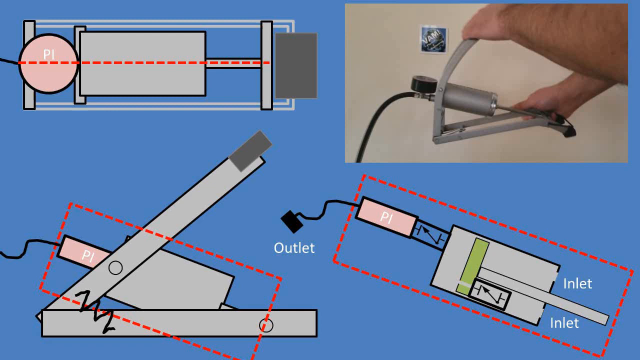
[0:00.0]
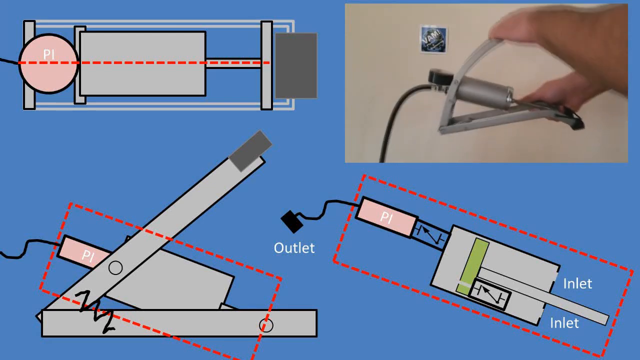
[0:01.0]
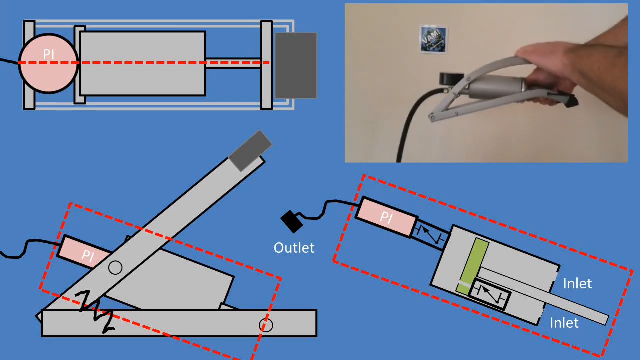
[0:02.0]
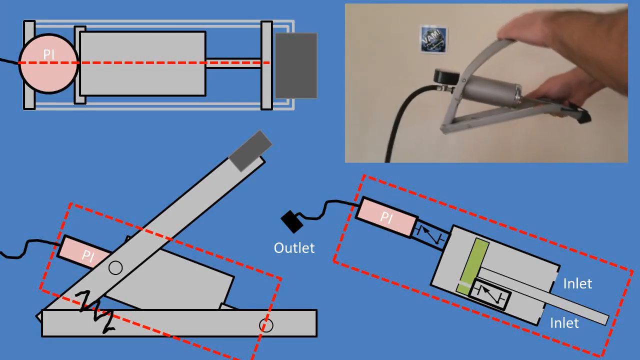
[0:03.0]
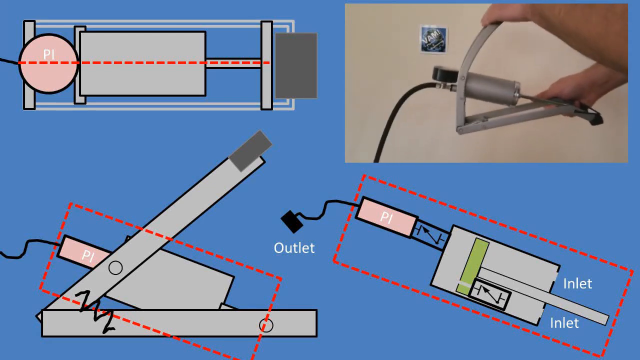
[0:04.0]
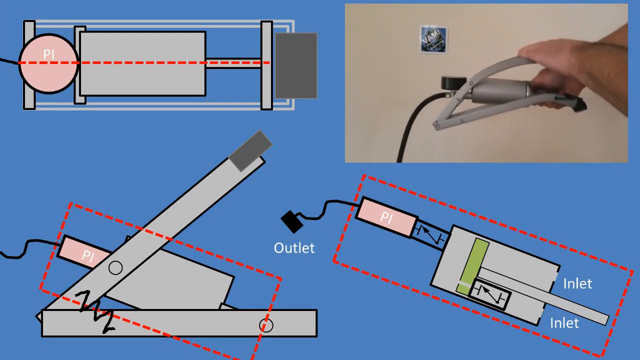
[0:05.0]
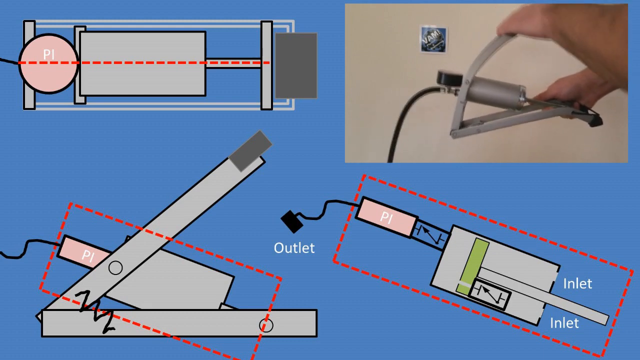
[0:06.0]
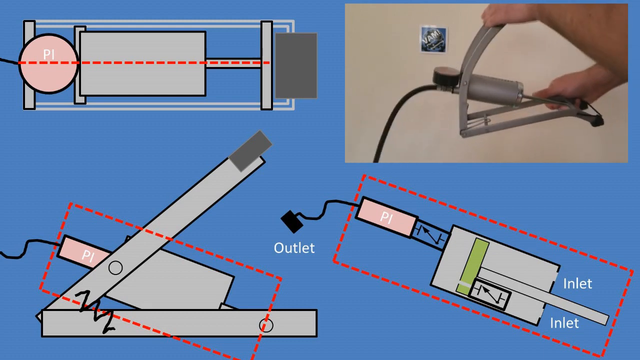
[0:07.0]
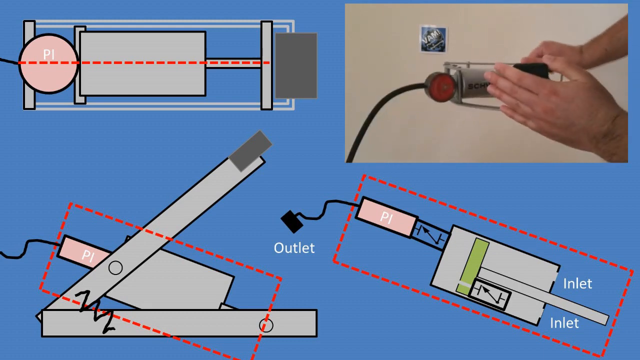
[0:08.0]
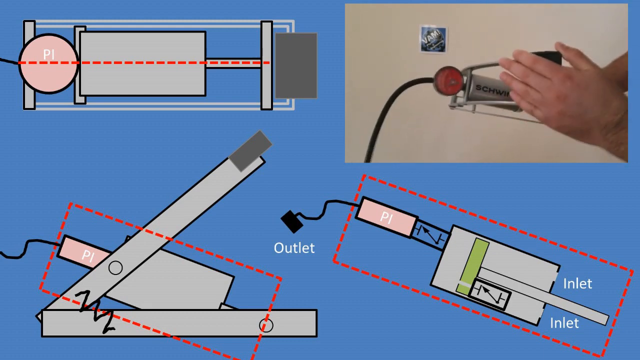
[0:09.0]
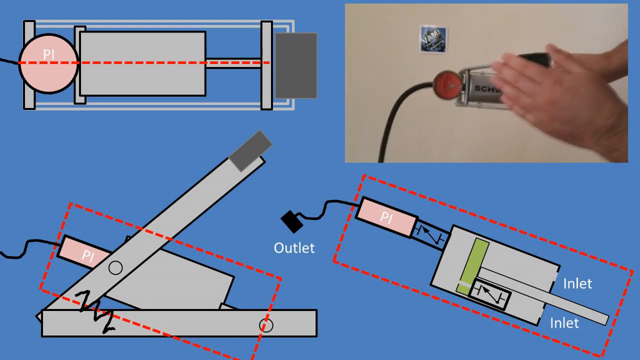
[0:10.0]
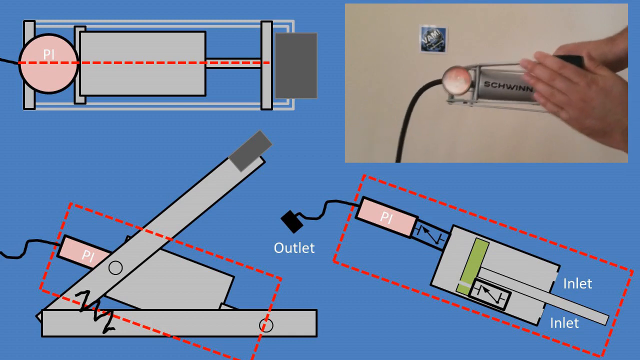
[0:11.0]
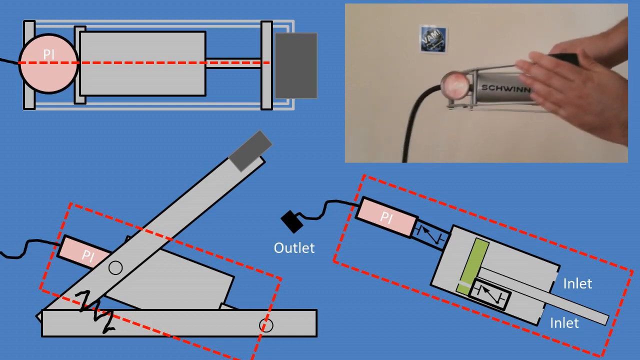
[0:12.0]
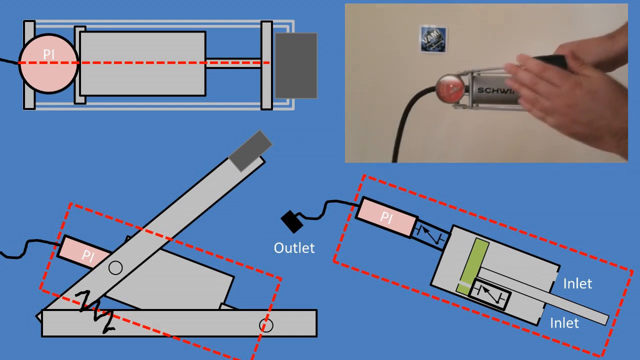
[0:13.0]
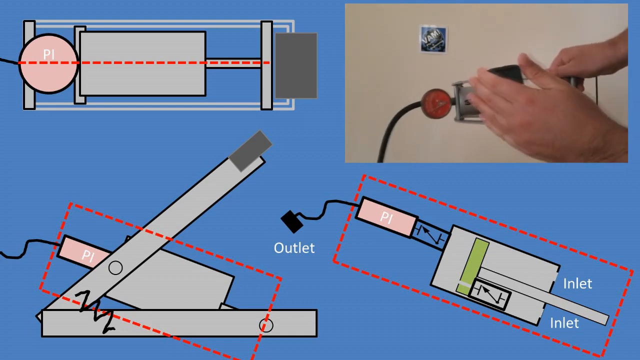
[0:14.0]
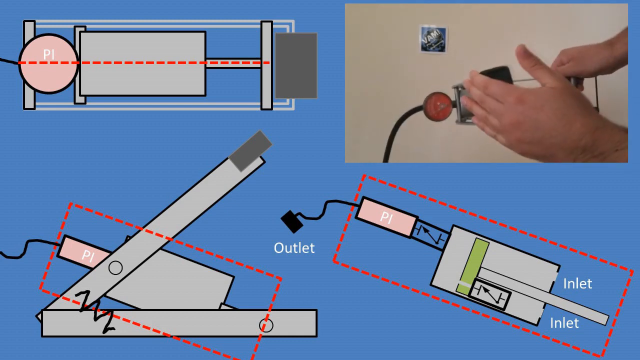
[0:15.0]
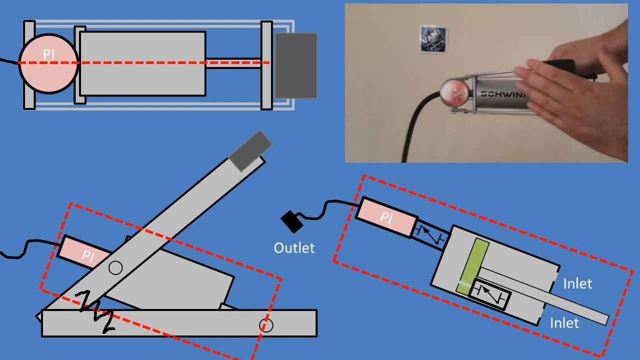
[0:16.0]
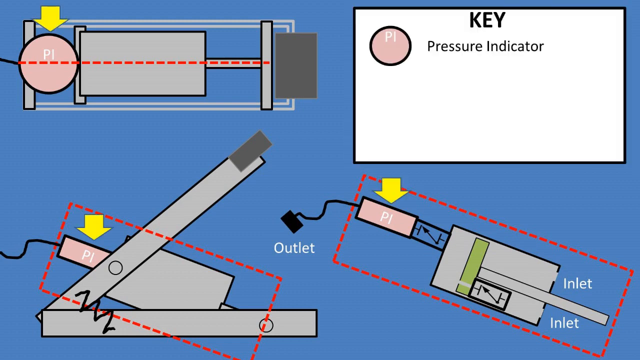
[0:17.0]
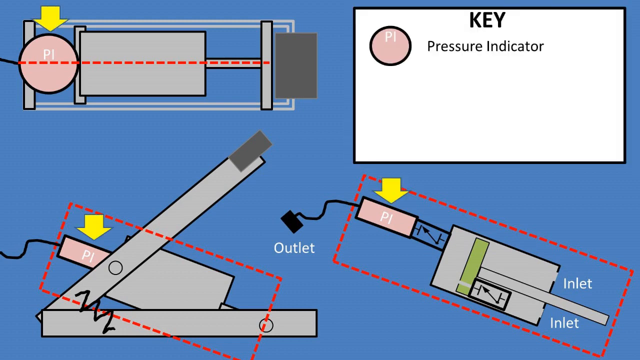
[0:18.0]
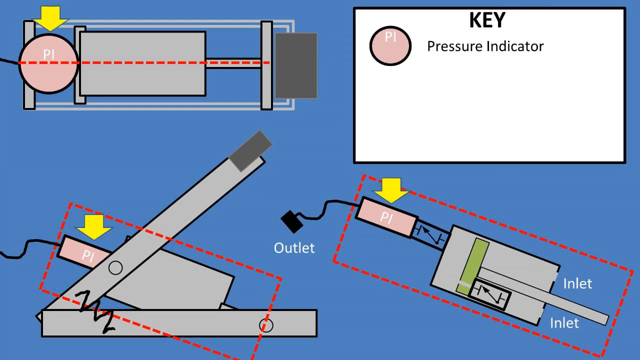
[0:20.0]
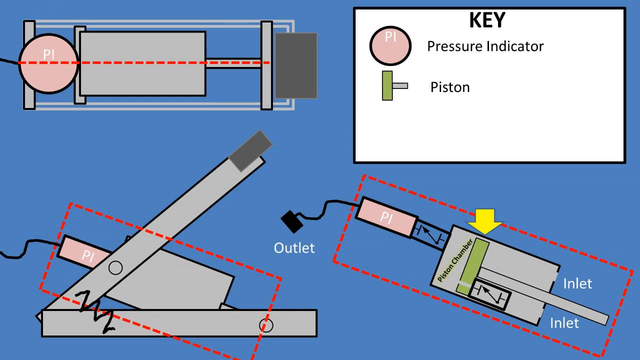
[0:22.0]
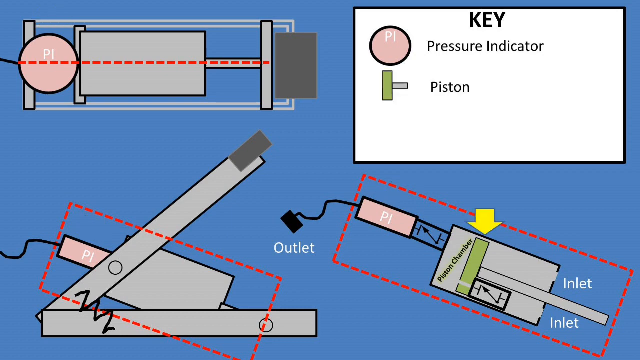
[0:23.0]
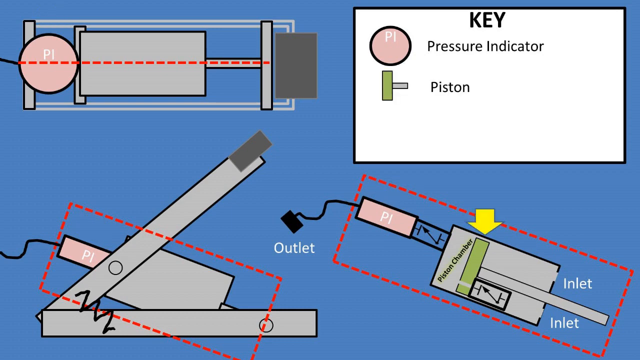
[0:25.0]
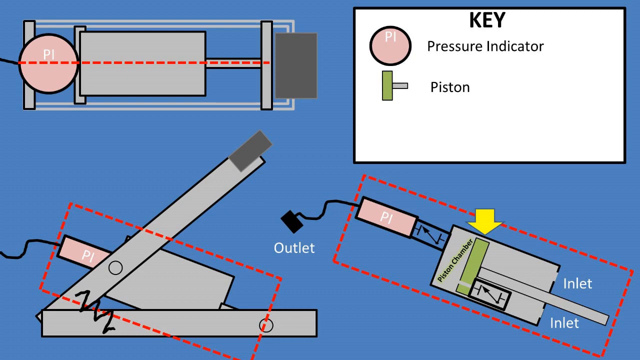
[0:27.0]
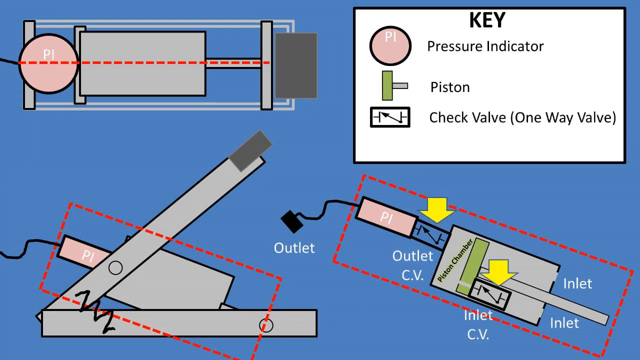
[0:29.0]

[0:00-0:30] Three diagrams are on the screen: one in the upper left, one in the lower left and one in the lower right. All depict the same gray device from different angles, with one pink circular piece on the left end that has a white outline around it. Each diagram has a dotted red line, indicating either a certain section or a plane on which the device is split for the pictures. The pink circle is labeled "PI", and an inlet and an outlet are also labeled. In the upper right of the screen, a video shows a person using the device, pushing down on a gray lever, which causes a kind of downward movement. In the video the circular piece is red and looks attached to a tube of some kind, potentially a power cord. This circular piece appears to be the pressure indicator, or PI in the diagram. A small piece called the piston is shown in green, and there is also a check valve, a one-way valve. After the video in the upper right plays, these parts are pointed at in the diagrams with yellow arrows.